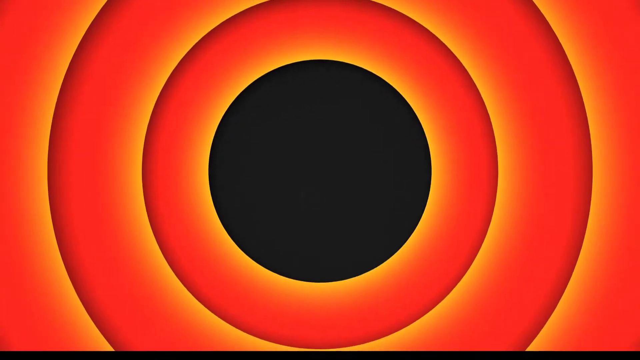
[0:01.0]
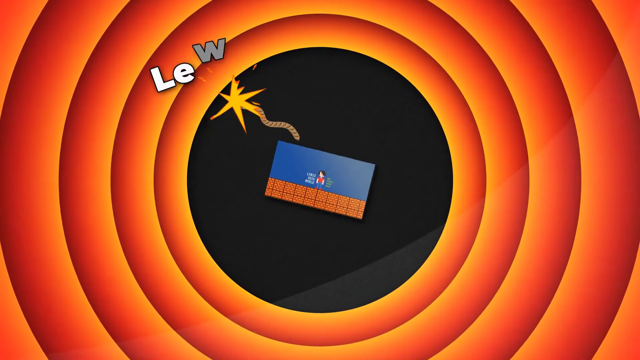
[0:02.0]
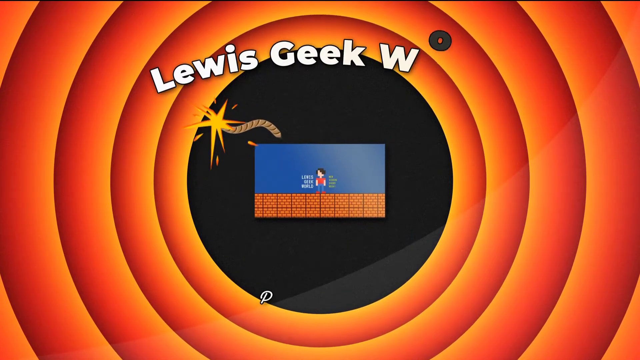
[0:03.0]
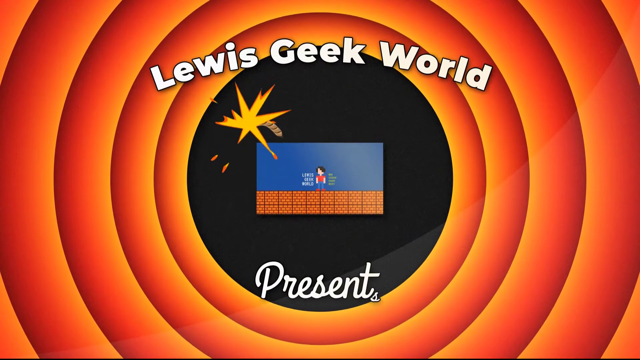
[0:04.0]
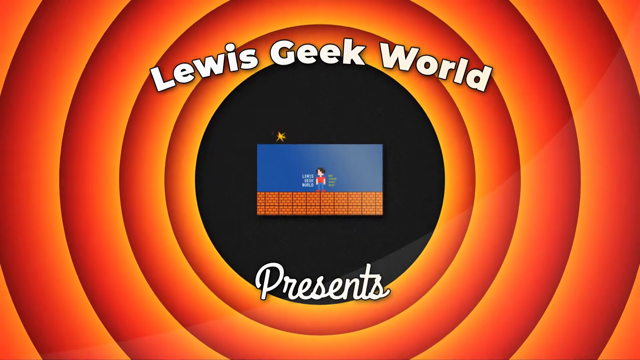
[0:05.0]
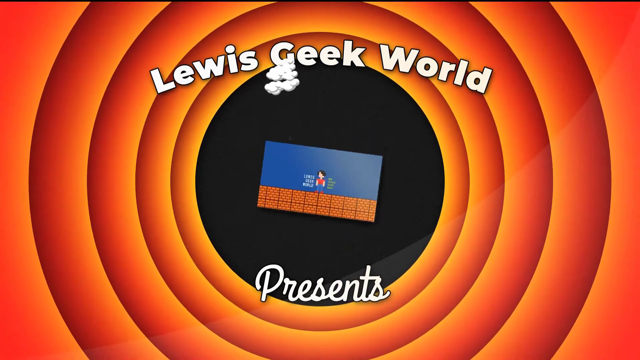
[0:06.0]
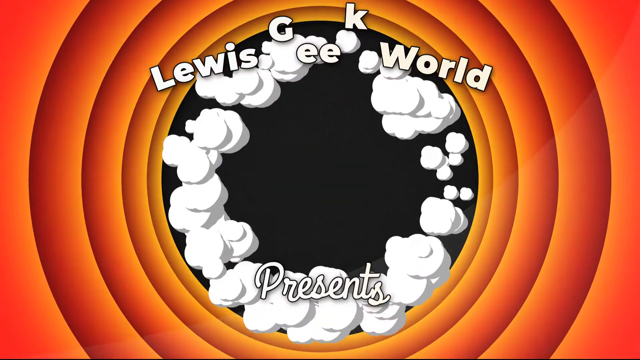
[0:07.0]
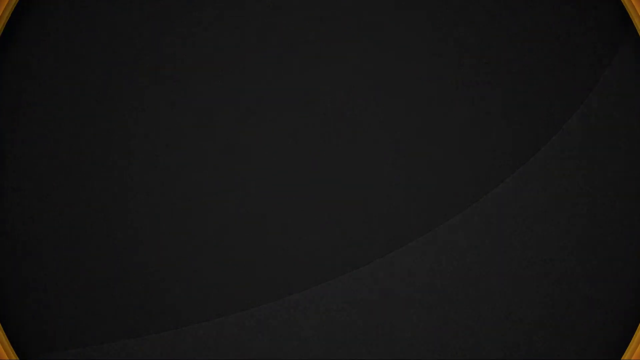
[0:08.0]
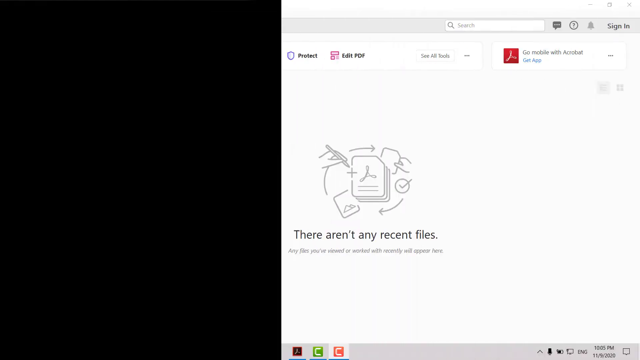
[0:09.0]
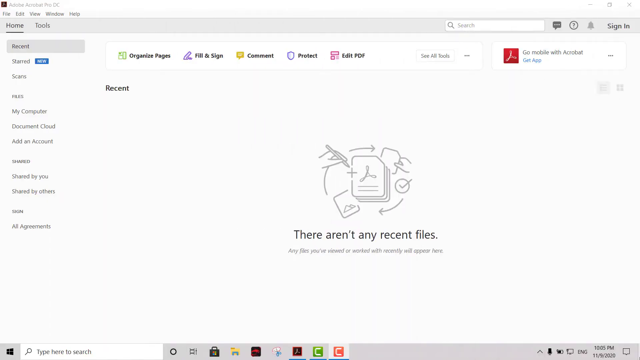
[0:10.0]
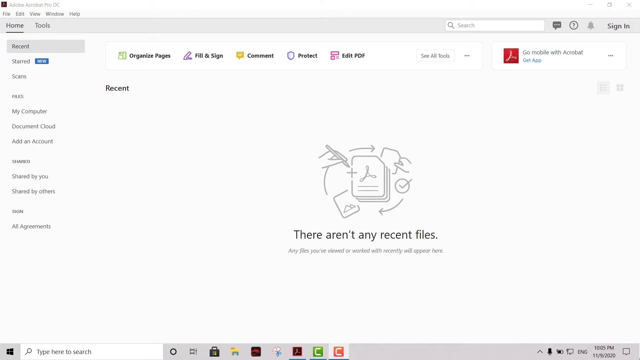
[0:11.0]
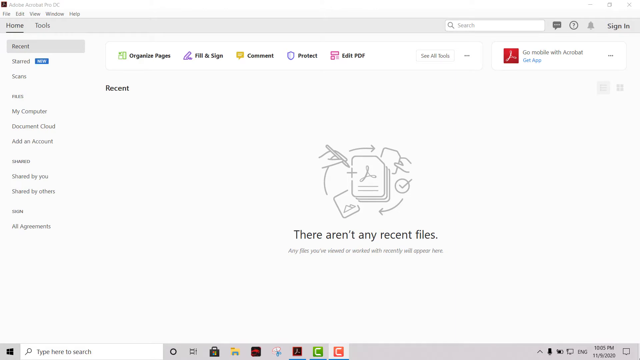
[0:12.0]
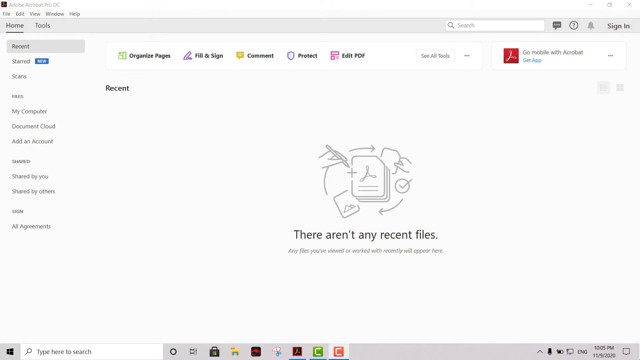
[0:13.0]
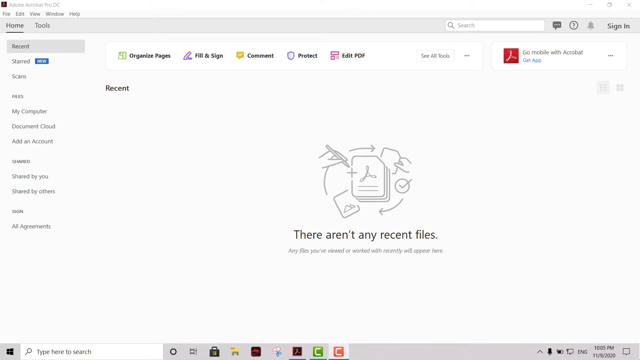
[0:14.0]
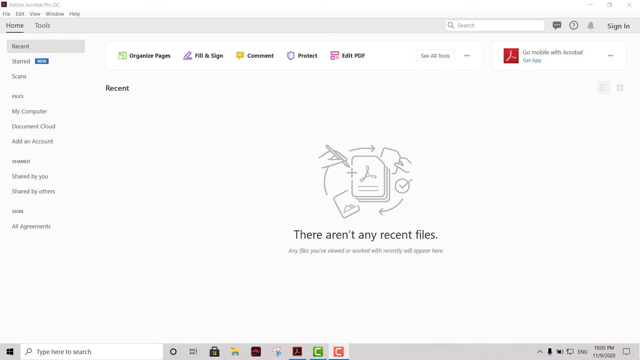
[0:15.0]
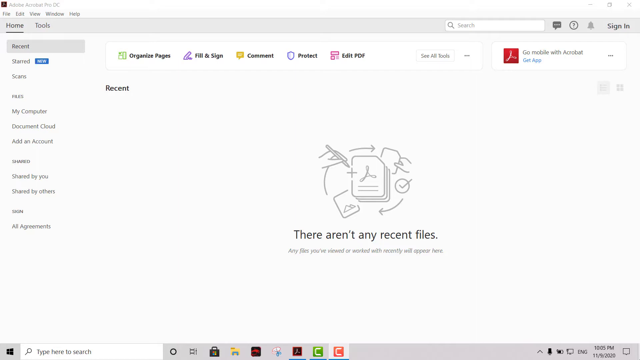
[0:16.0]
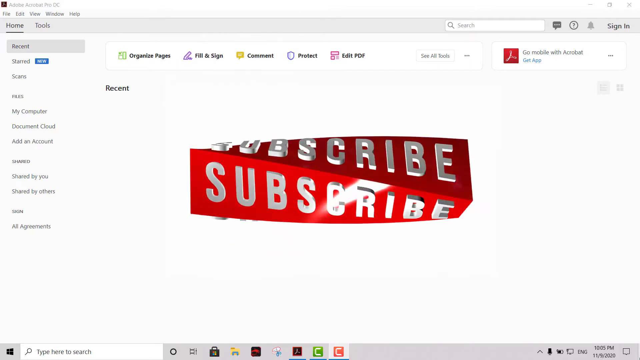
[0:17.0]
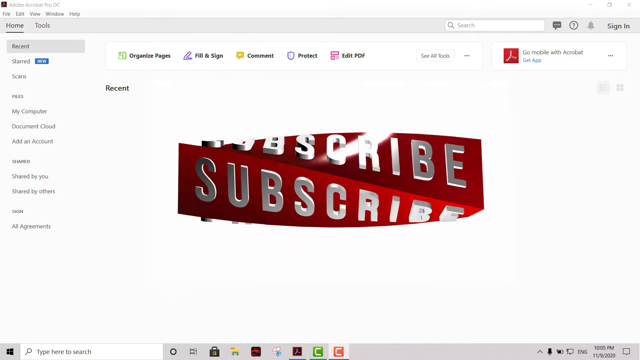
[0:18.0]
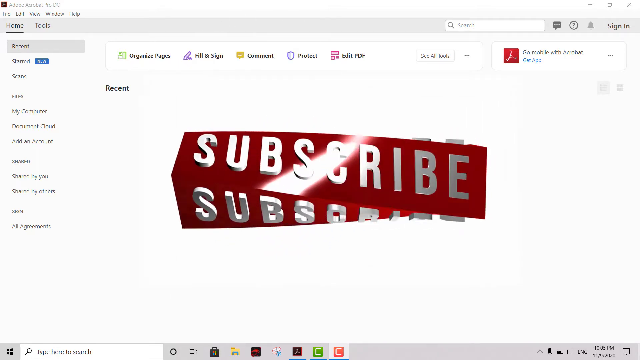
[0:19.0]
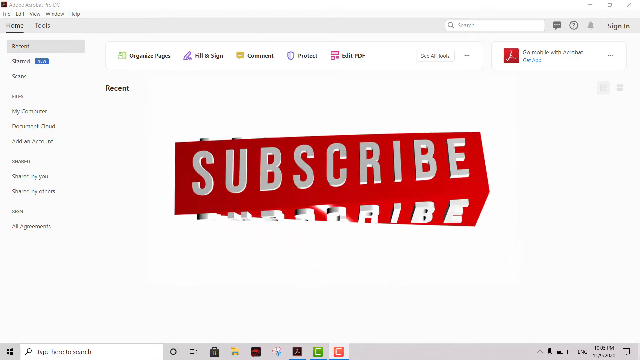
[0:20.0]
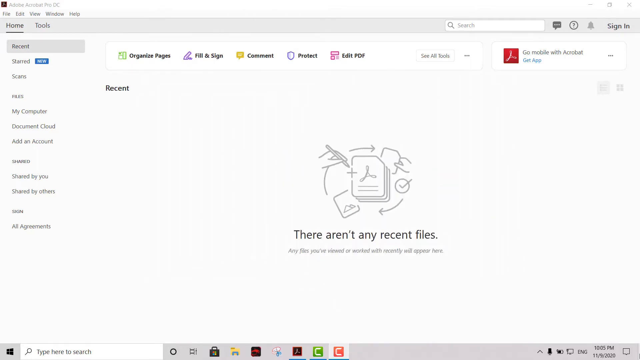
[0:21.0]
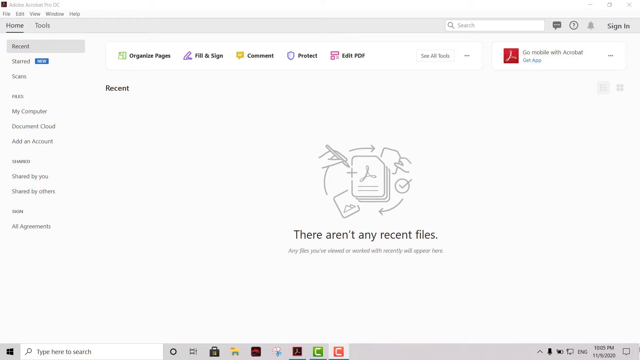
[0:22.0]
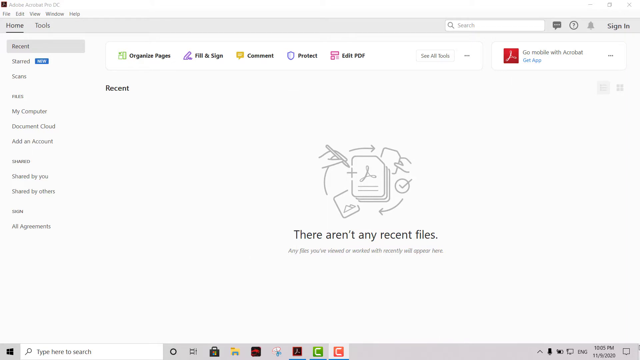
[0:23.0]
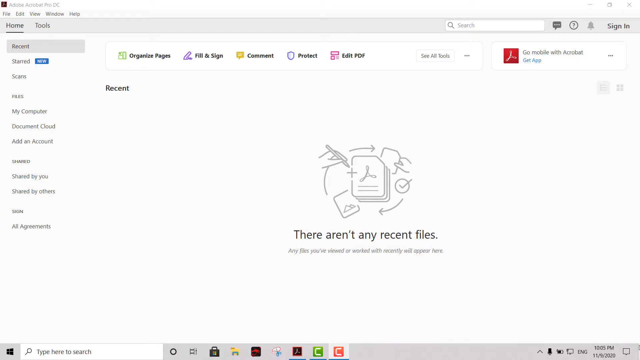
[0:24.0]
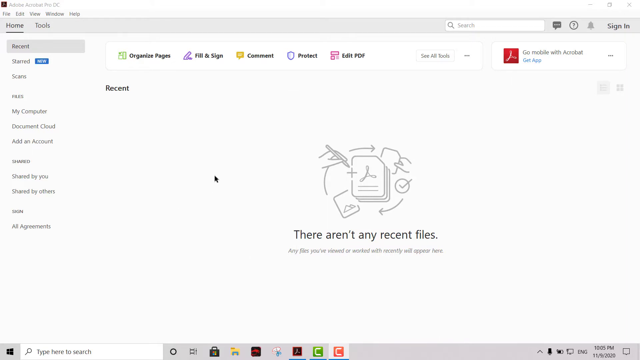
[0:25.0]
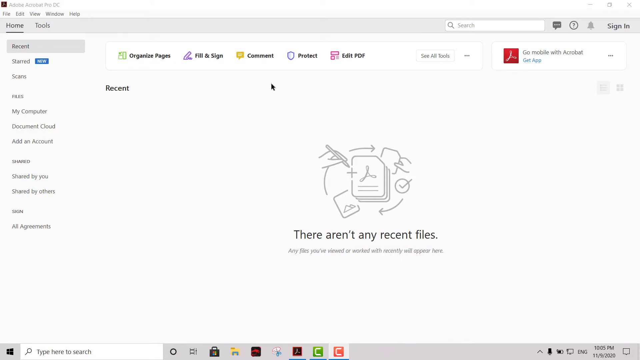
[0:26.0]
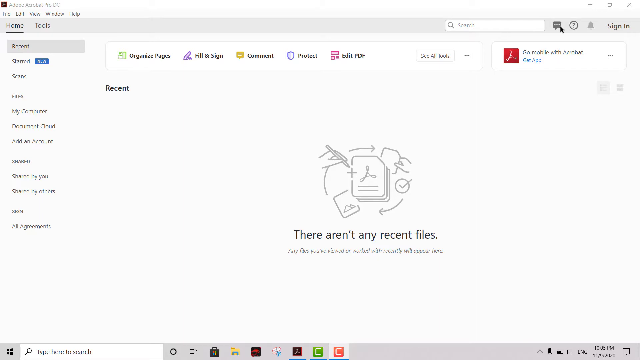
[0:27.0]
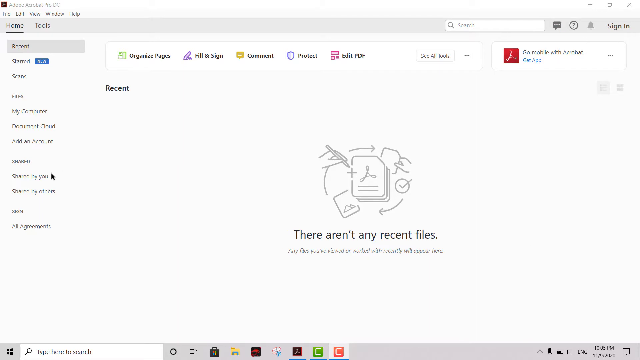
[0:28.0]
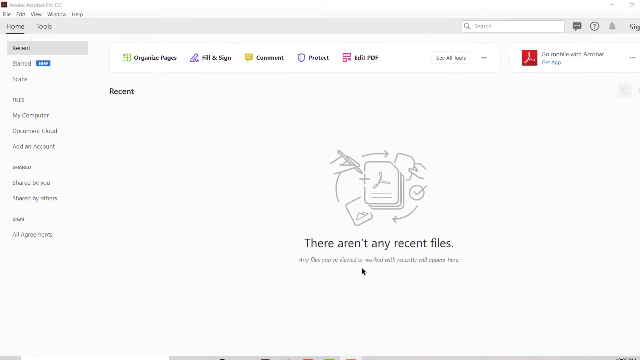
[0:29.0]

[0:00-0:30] The video opens on a series of orange concentric circles. At the top of the inner circle, "Lewis geek world" appears in white text, with "presents" below it. In the middle of the center circle is a rectangle with what looks like a video-game-style image of a cartoonish character. Something that looks like a bomb is lit on fire in the top left corner. It blows up, and a cloud of white, cartoon-looking smoke appears. The scene then transitions to a computer screen that looks like Adobe Acrobat. Across the top bar are the words "organize," "pages," "fill and sign" and "comment." In the middle of the screen, "subscribe" is written in white on all sides of a distorted red rectangle that looks almost as if it had been twisted. In the middle, text reads "there aren't any recent files," and a black pointer moves quickly in a circle.